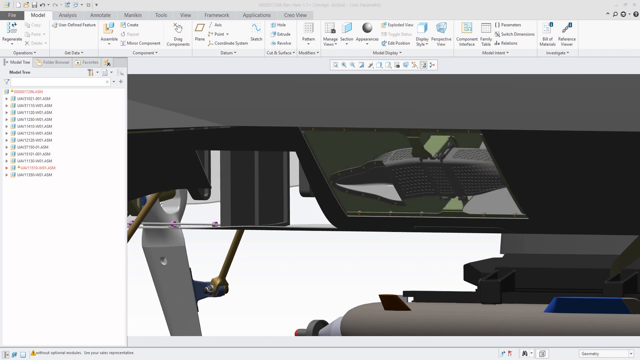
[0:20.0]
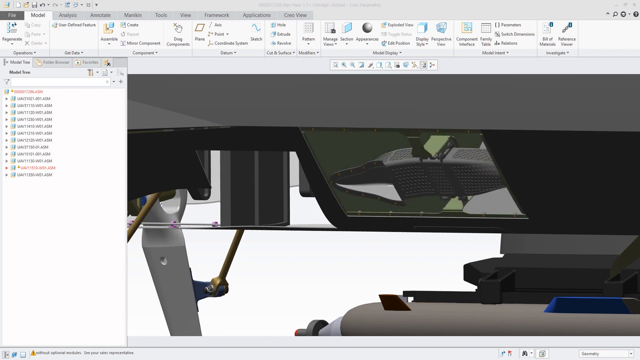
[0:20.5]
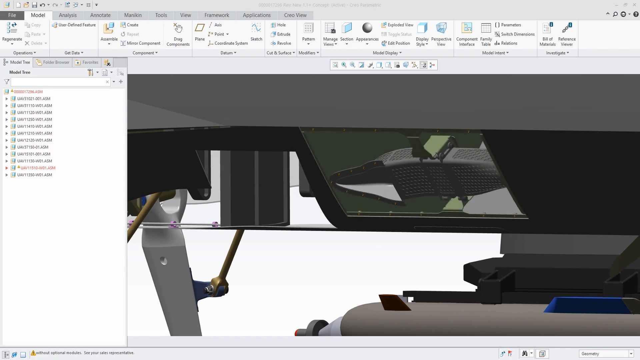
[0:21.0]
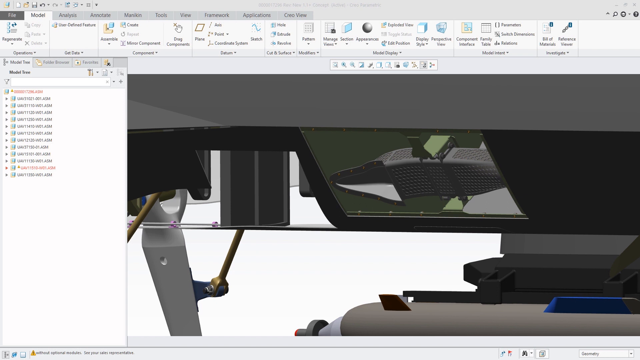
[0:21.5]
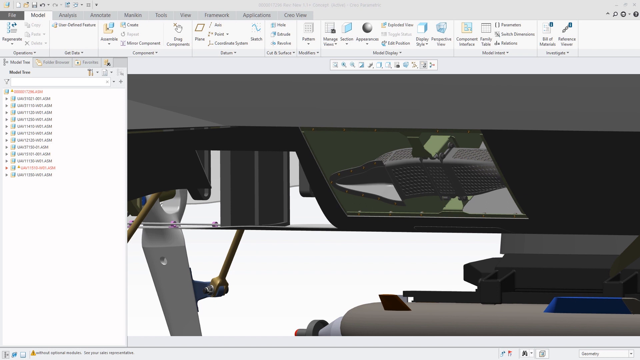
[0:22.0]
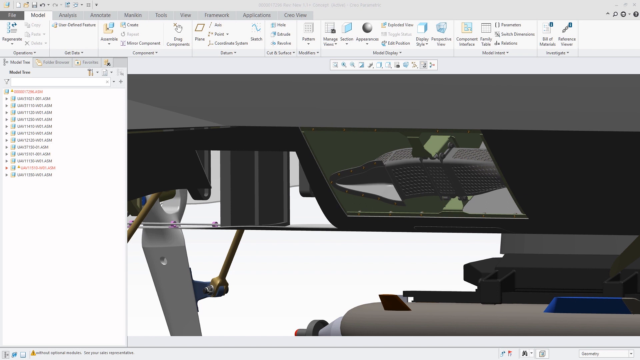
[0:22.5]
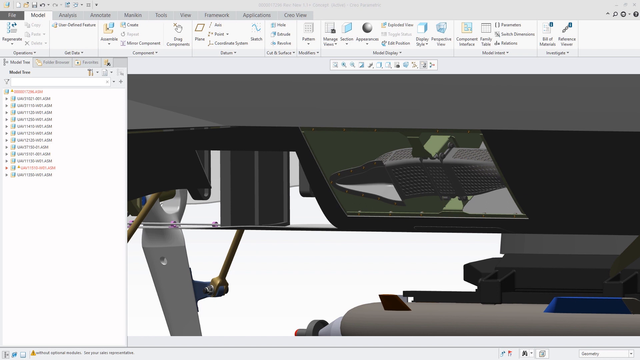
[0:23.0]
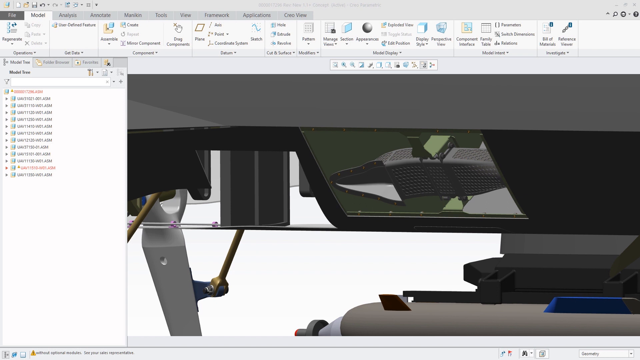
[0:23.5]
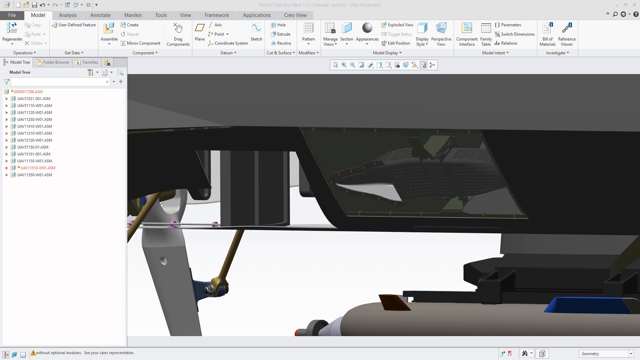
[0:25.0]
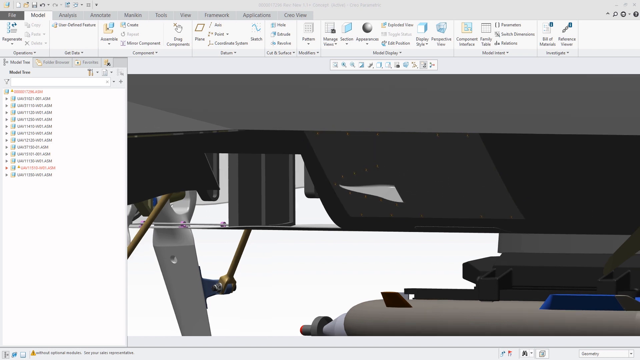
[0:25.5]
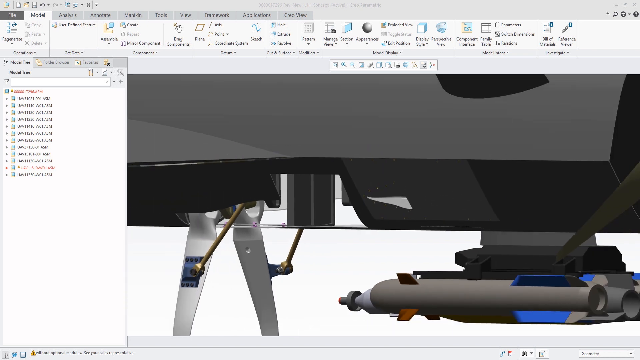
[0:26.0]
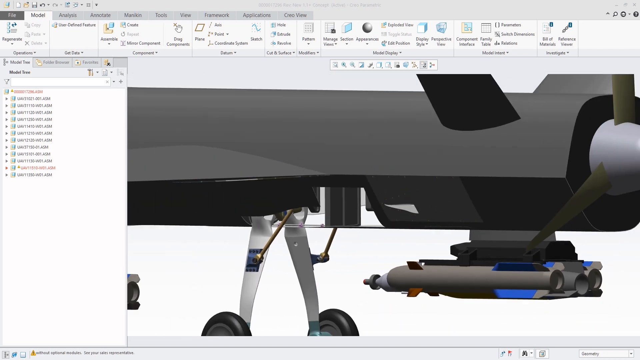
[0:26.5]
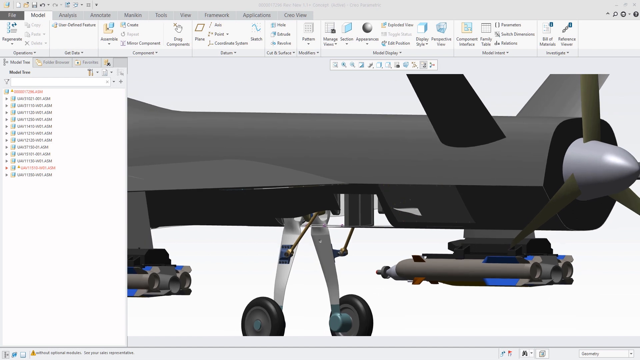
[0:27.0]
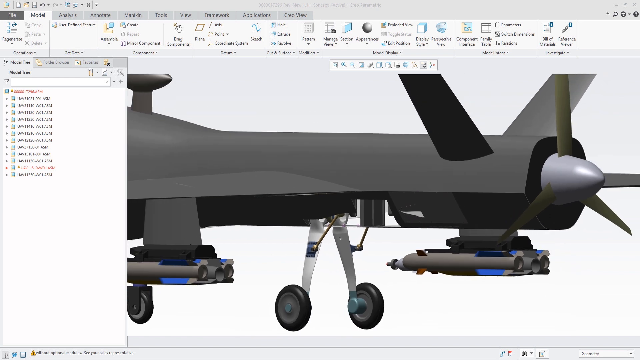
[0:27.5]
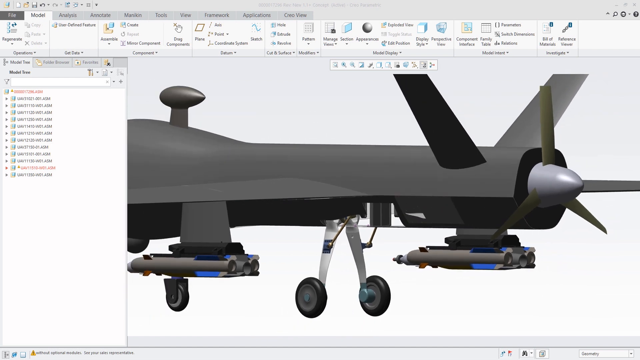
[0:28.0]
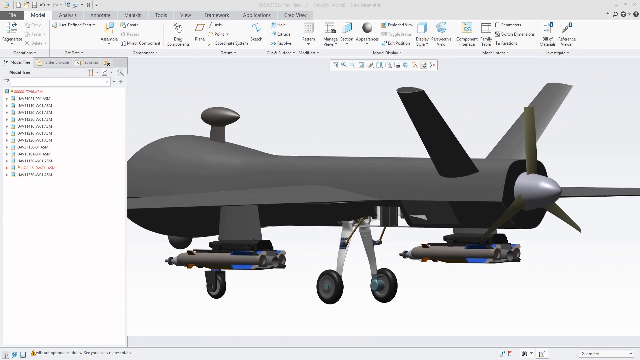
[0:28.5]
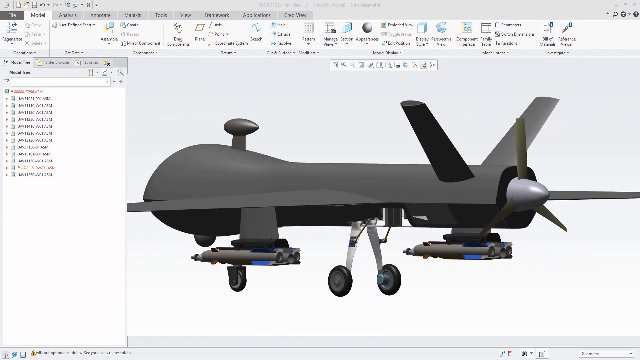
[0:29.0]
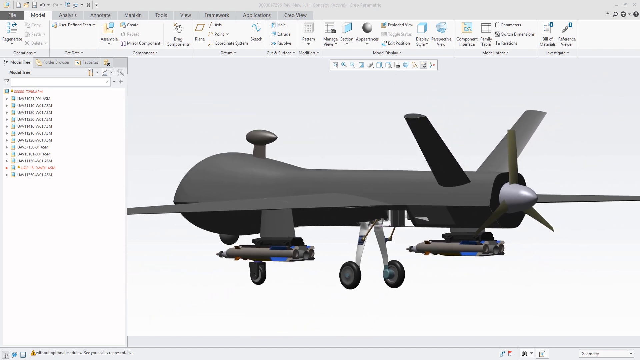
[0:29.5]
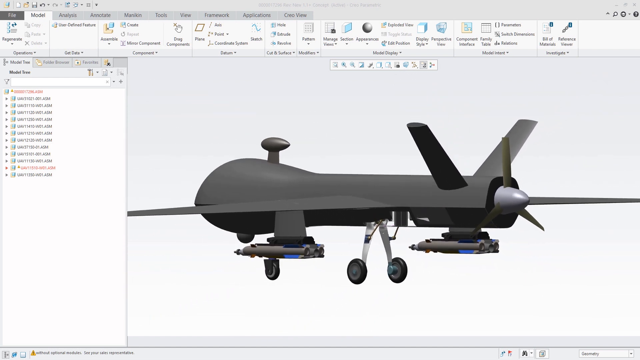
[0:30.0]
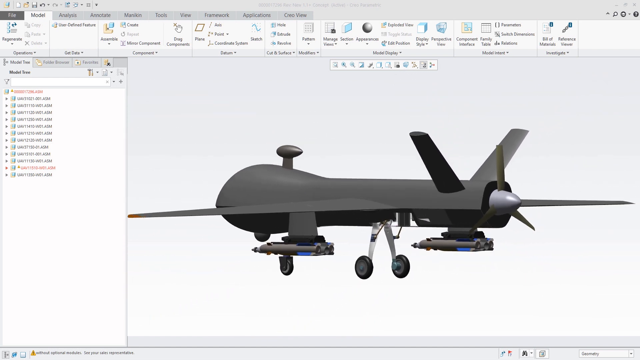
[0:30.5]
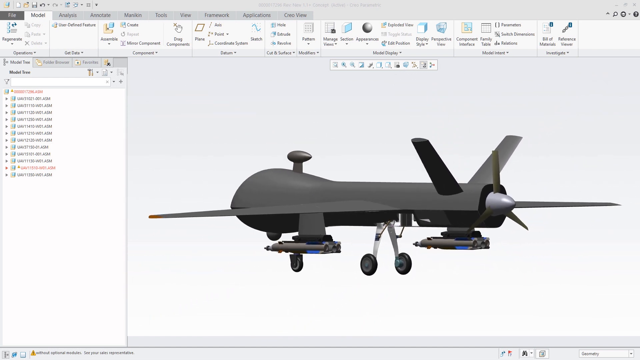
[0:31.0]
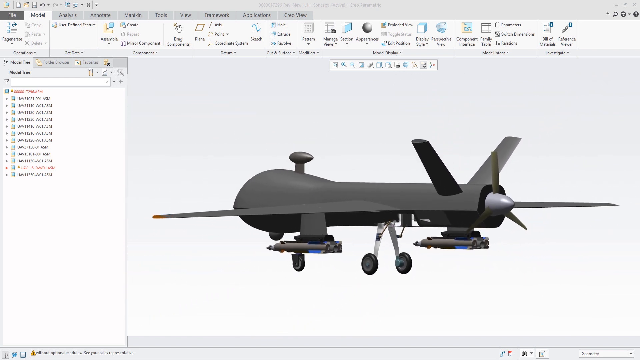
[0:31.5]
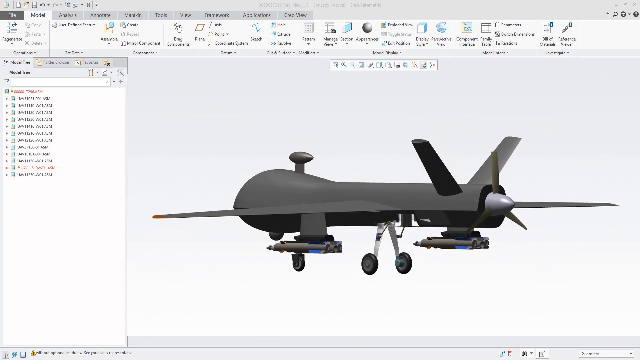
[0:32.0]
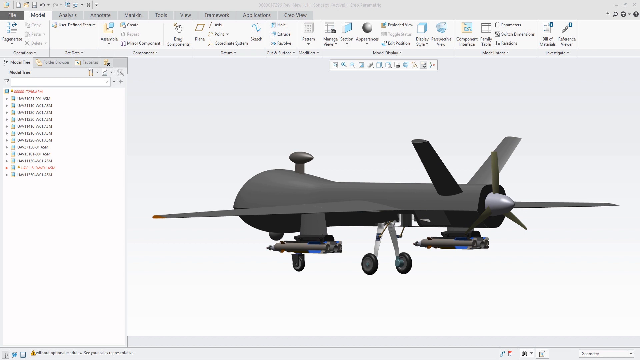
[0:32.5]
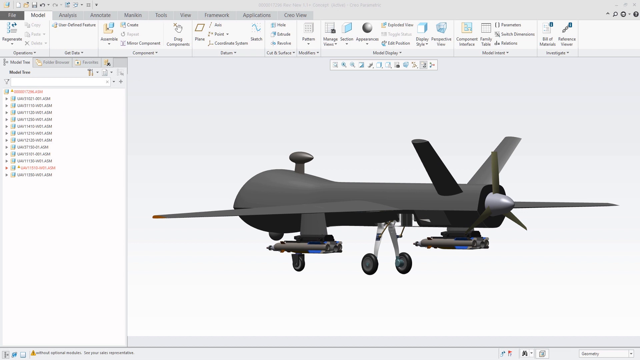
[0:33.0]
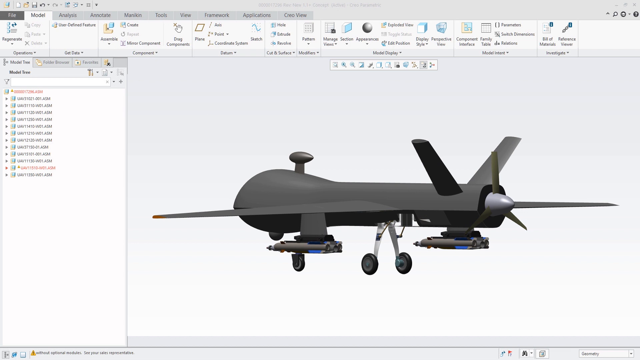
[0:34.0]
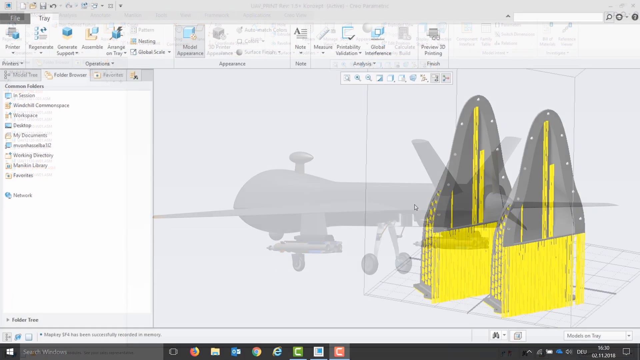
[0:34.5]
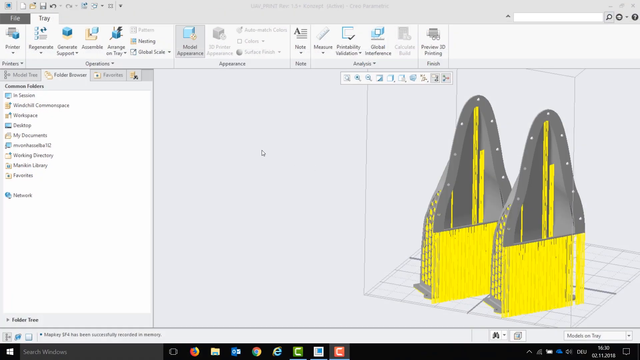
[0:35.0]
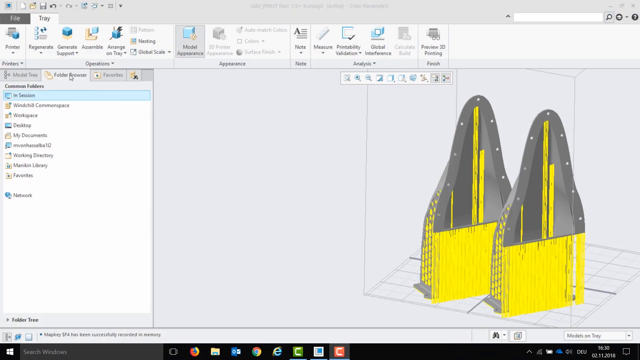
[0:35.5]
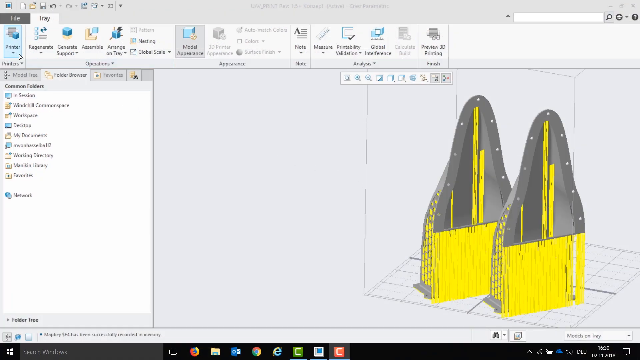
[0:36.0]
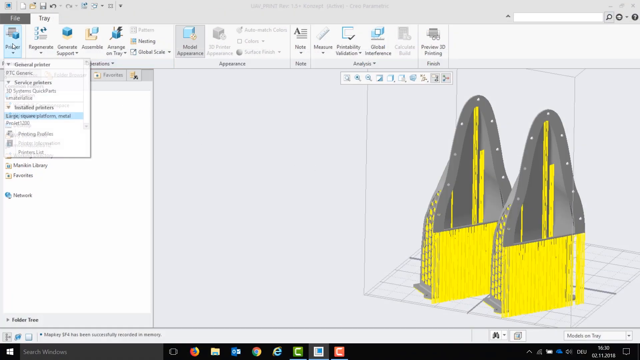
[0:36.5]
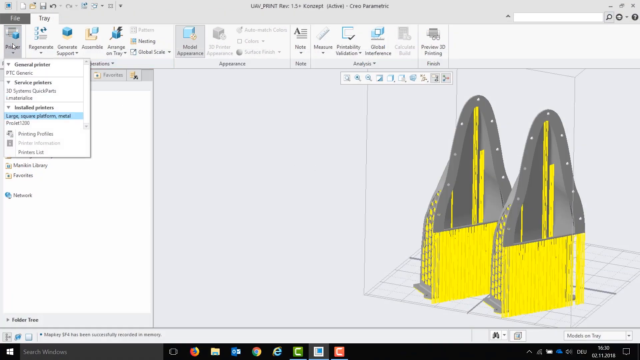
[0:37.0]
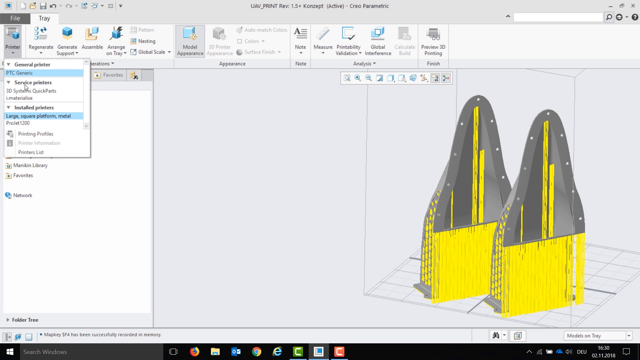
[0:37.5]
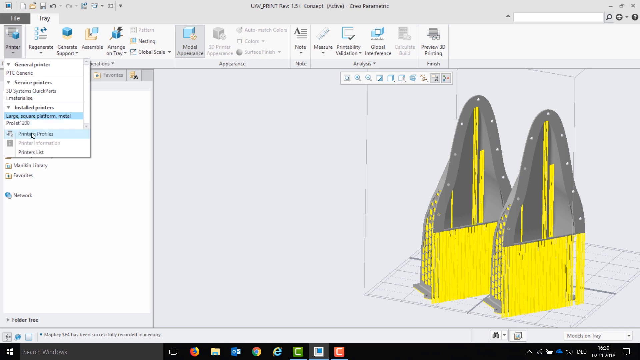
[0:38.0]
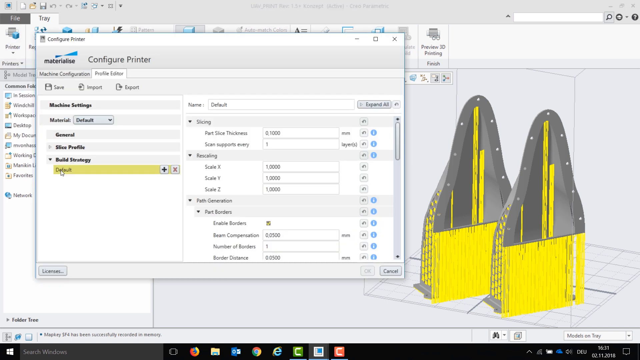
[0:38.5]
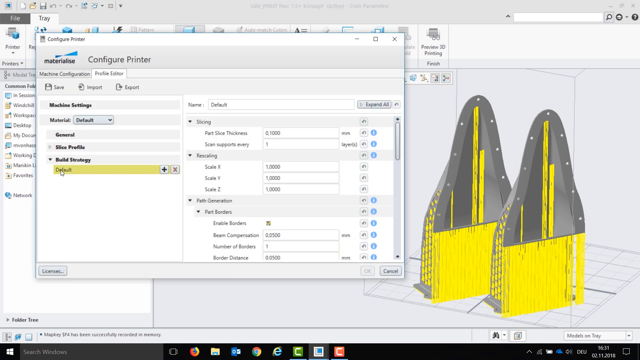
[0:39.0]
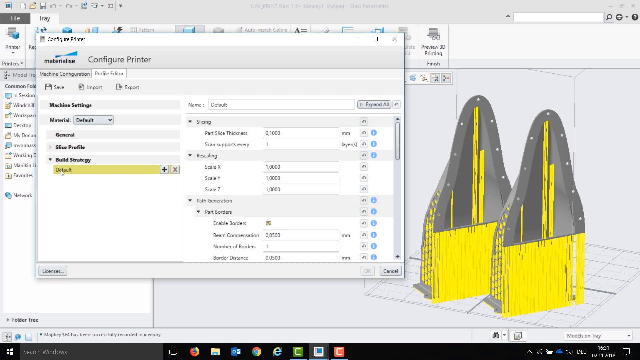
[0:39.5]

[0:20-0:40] A user's entire screen is shared, showing 3D modeling software in which they pick apart parts of a machine that turns out to be some sort of plane or drone. They zoom in on a piece in the undercarriage, then zoom out slowly to show the entire span of the plane. Another page then shows that piece on its own, not attached to the drone; it is gray and yellow, and there are two identical pieces. The user clicks a tab that says "poster", and it goes down to "large square platform metal". They click that, and a box comes up that says "Configure Printer". They select "Default" and then select "Cancel".